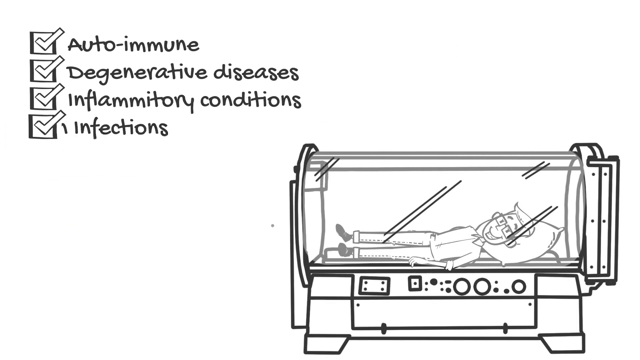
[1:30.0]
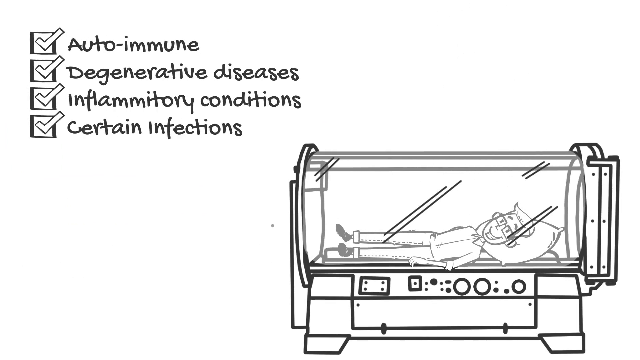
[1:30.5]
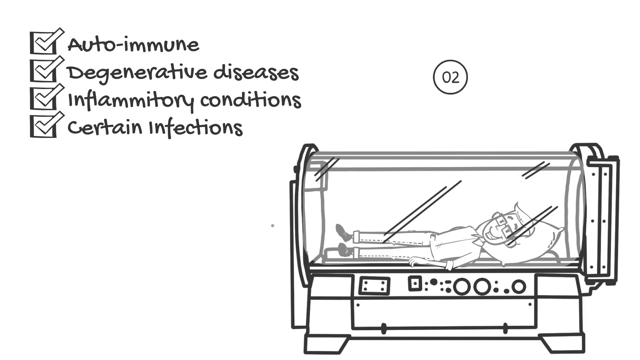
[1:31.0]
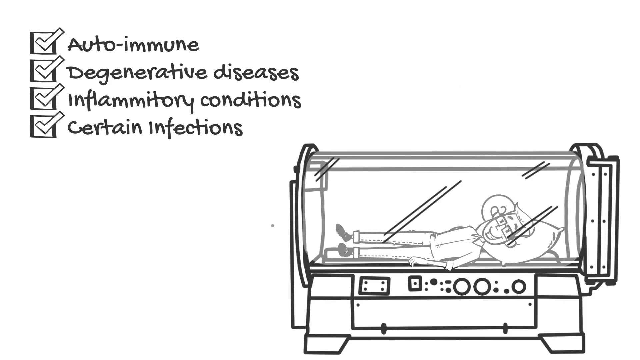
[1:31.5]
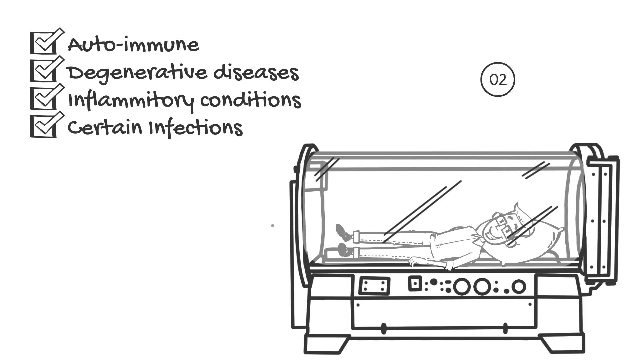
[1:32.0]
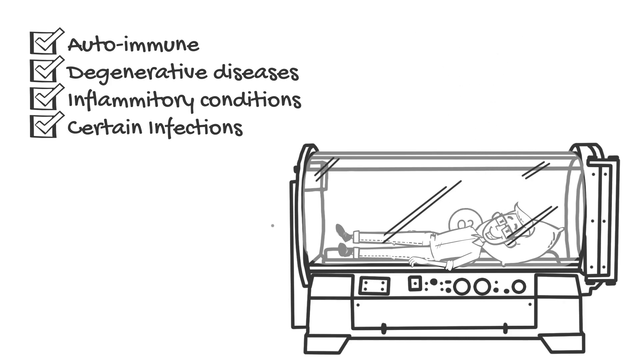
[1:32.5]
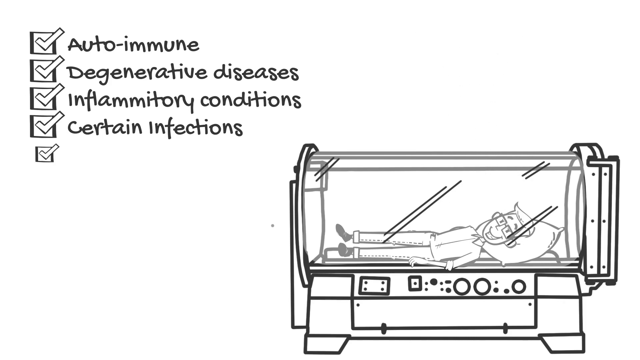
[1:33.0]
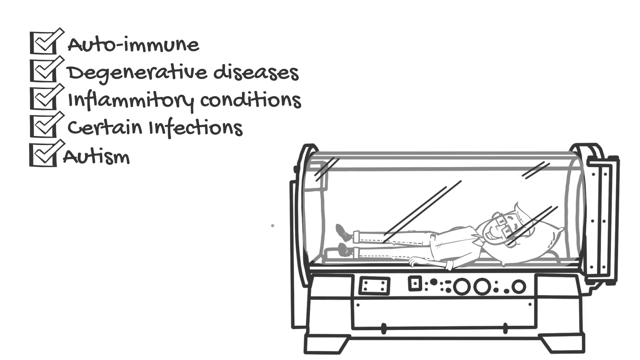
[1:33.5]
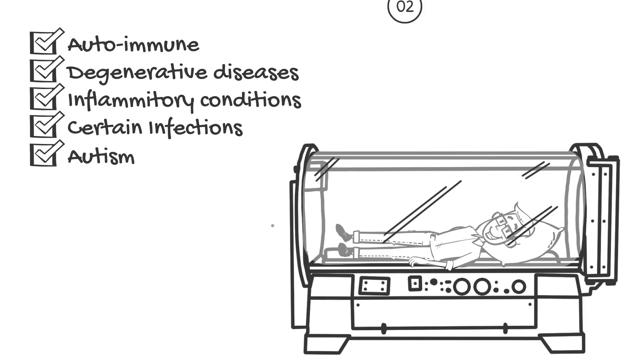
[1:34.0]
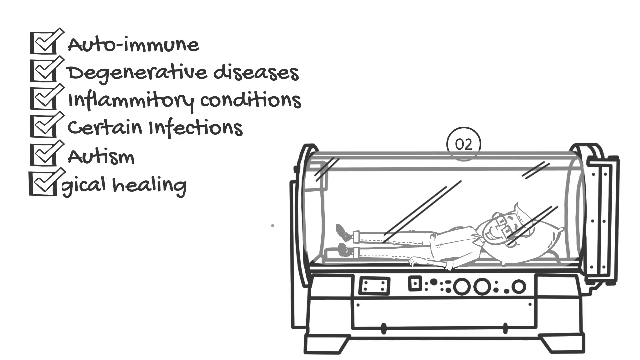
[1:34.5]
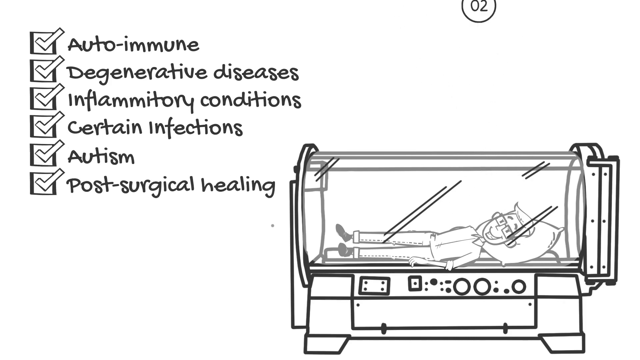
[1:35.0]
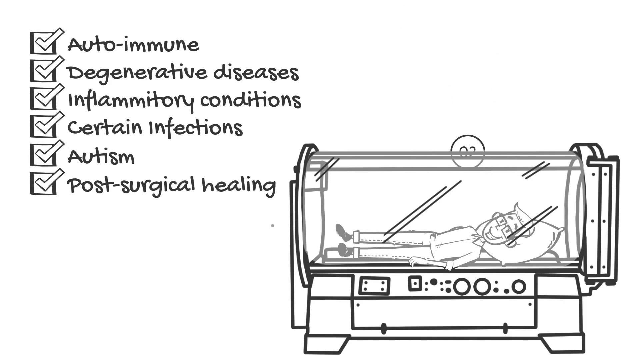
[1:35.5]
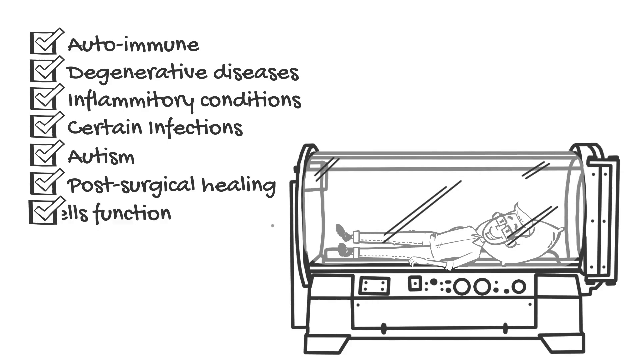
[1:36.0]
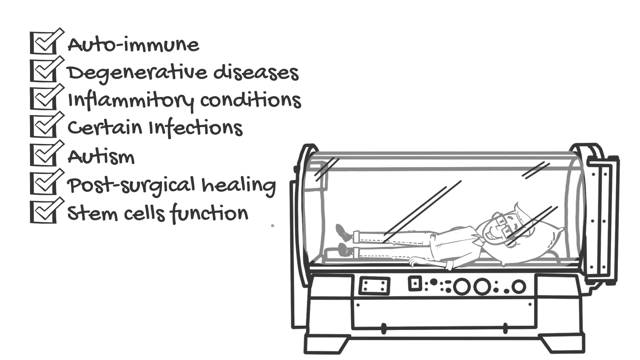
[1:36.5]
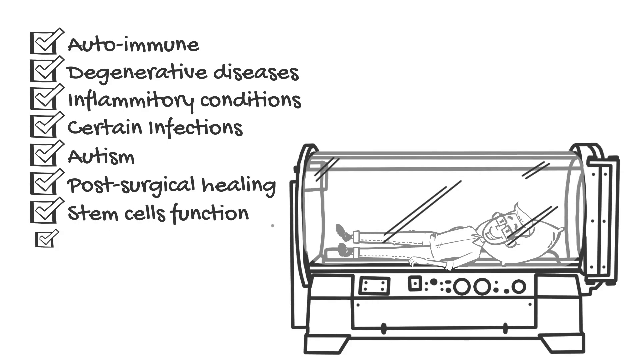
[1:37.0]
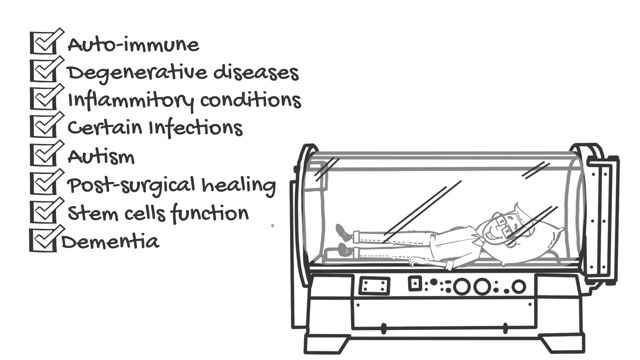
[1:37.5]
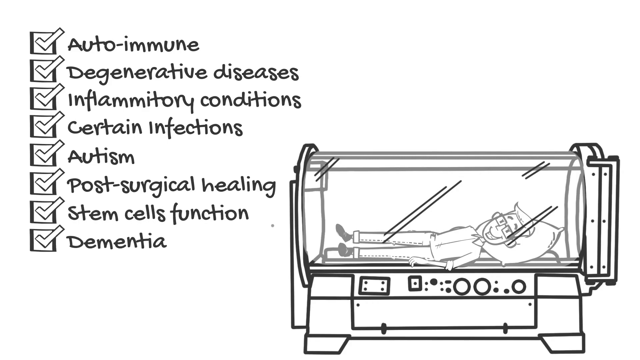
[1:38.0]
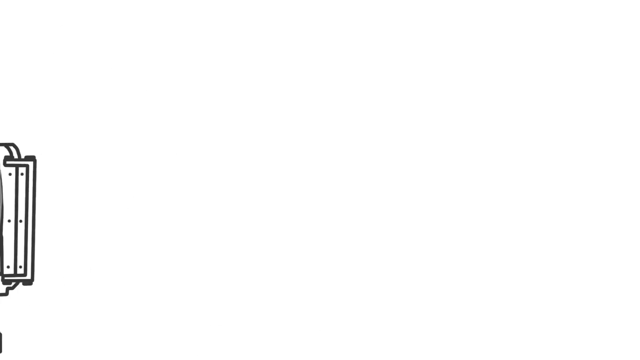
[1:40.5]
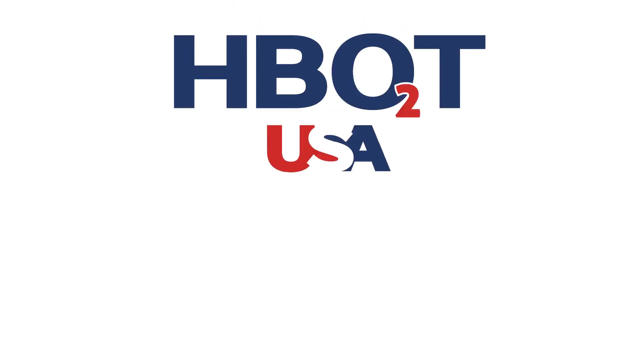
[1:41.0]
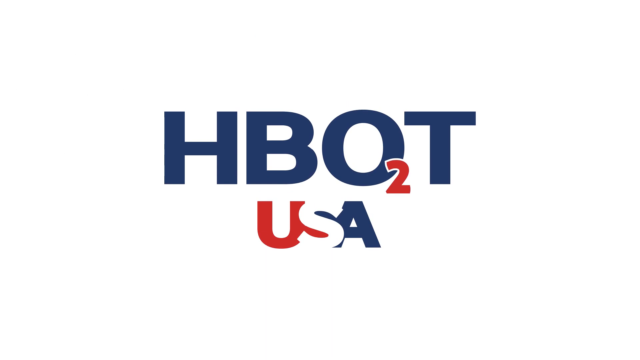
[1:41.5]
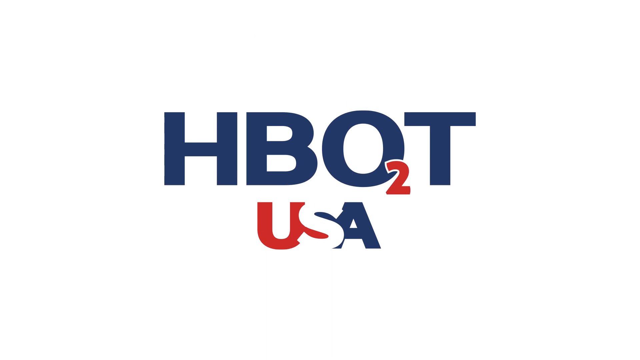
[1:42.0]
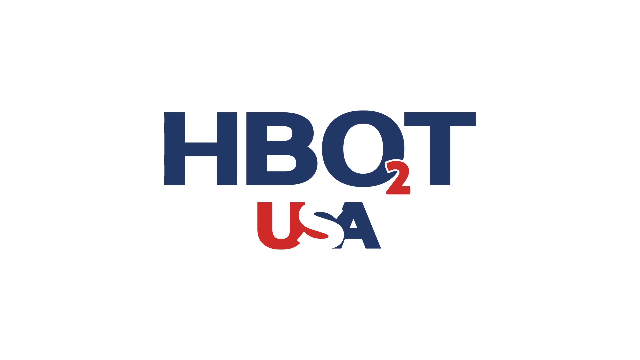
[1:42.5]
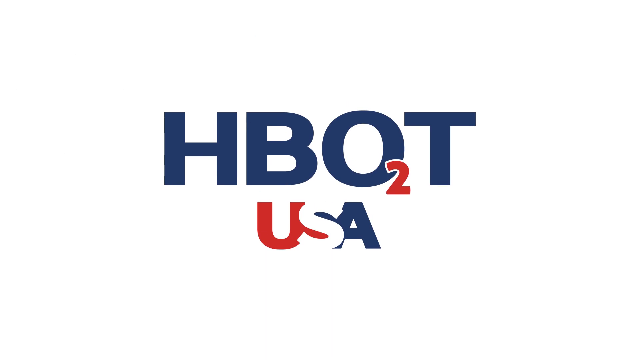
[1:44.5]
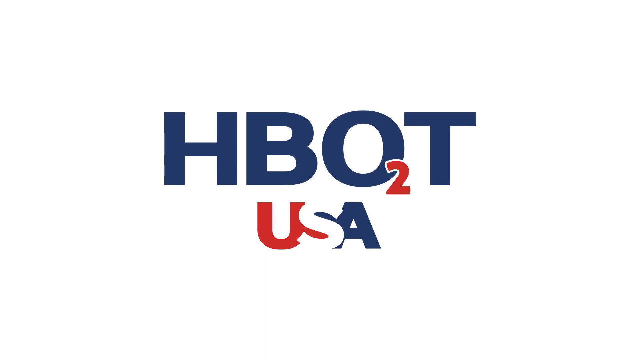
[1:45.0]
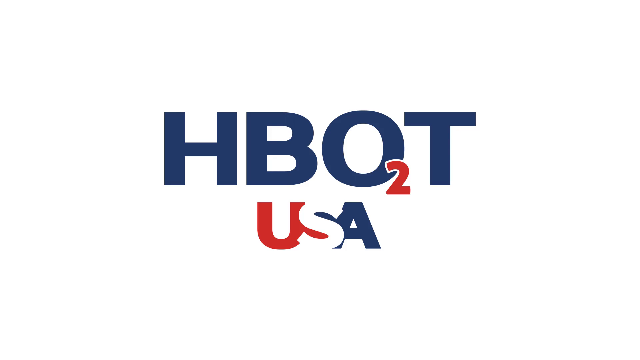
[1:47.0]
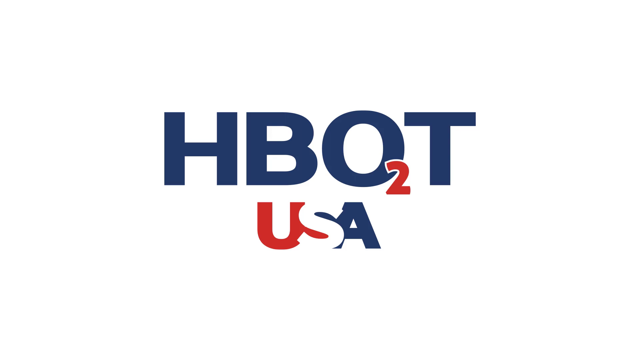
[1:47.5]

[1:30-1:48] In the top left corner are four key terms, each checked with a white checkmark: autoimmune, degenerative diseases, inflammatory conditions and infections. On the right, the patient with glasses is still in some sort of incubator as O2 falls down. The checkmark list continues with inflammatory conditions, certain infections, autism, post-surgical healing, stem cells function and dementia, which is last on the list. The final screen shows a white background with the HBOT2 USA logo: HBOT in blue, a 2 in red, and USA underneath in flag colors. The video stays on this screen for a while.